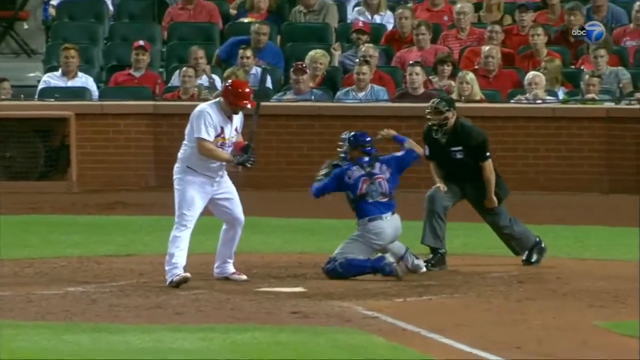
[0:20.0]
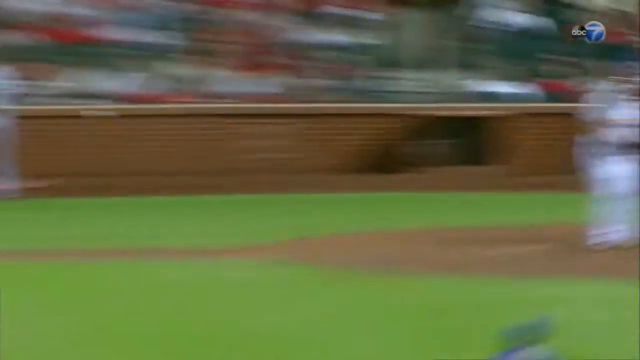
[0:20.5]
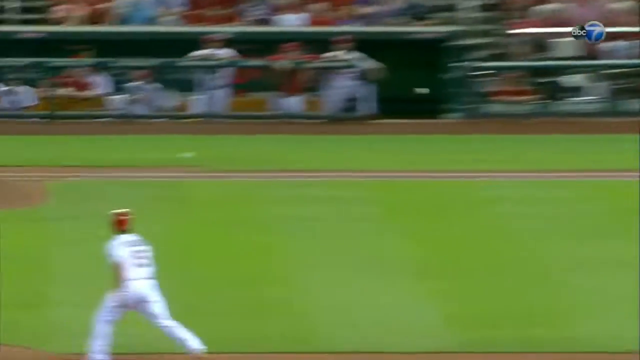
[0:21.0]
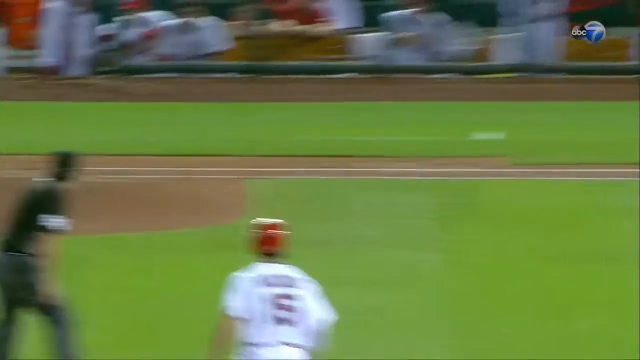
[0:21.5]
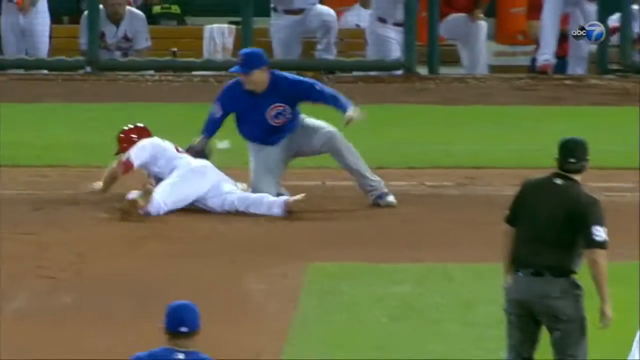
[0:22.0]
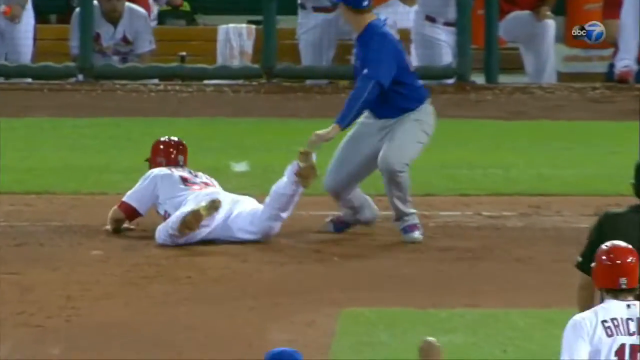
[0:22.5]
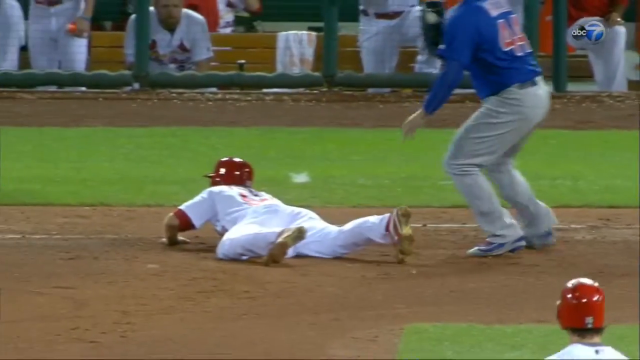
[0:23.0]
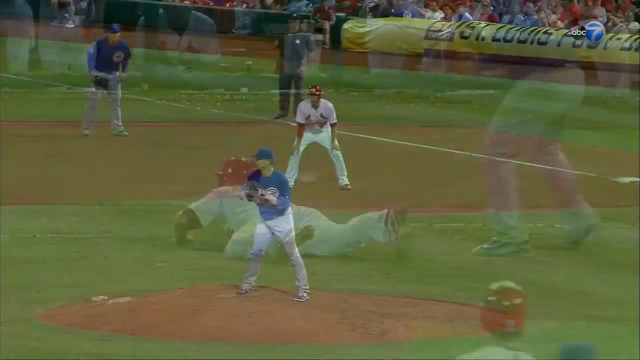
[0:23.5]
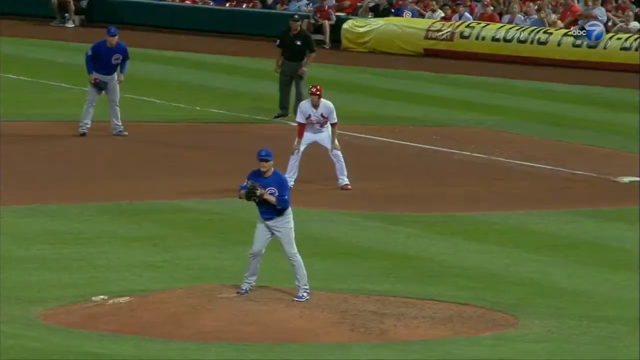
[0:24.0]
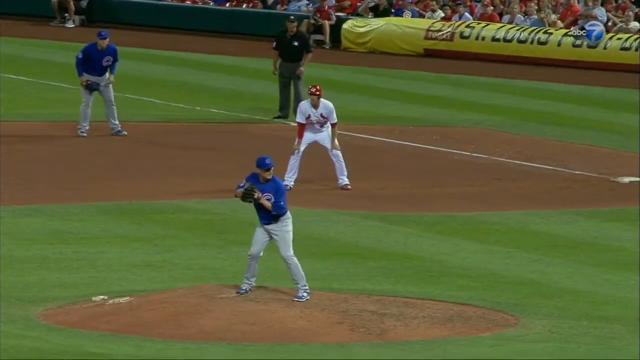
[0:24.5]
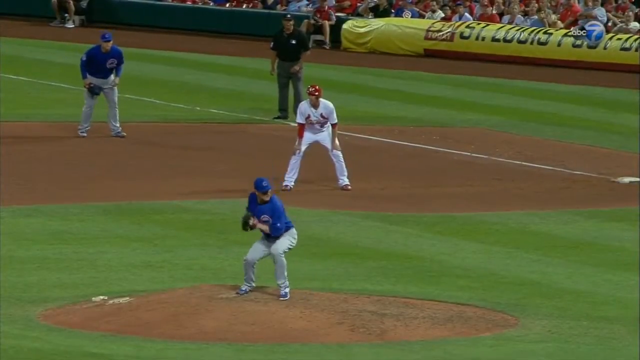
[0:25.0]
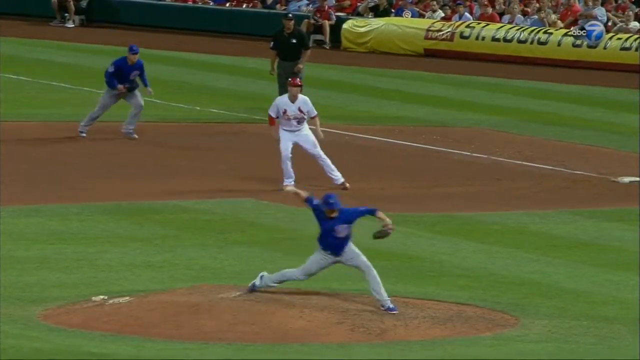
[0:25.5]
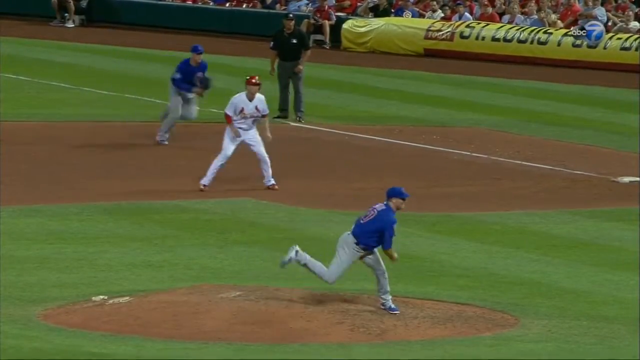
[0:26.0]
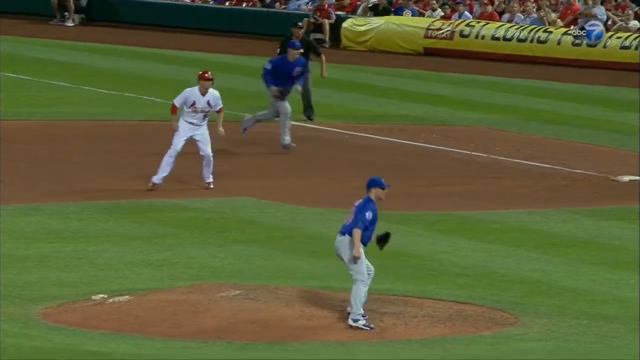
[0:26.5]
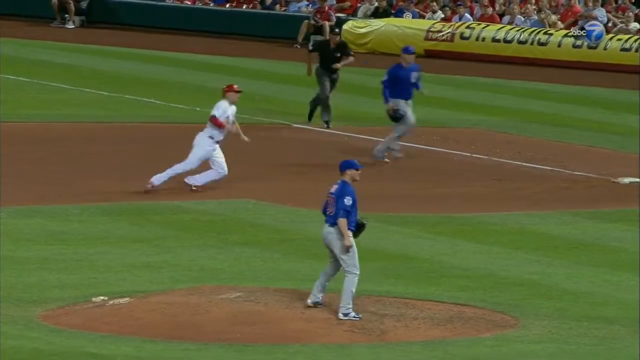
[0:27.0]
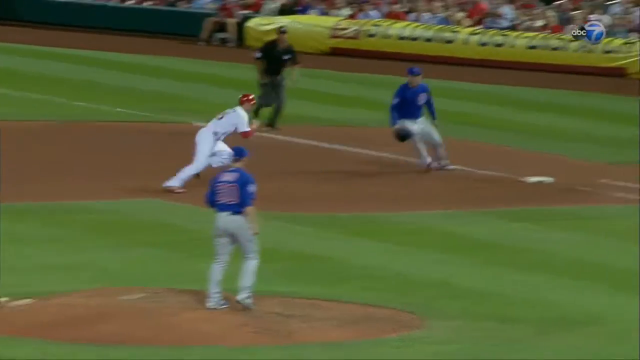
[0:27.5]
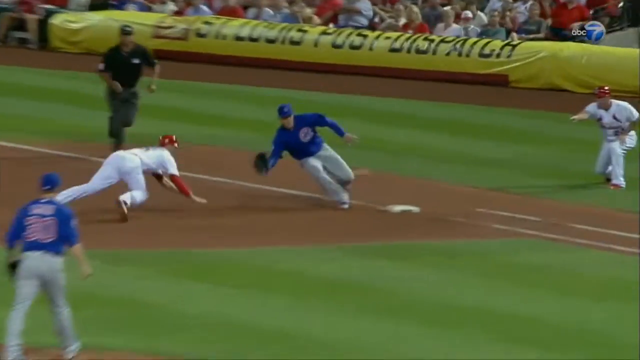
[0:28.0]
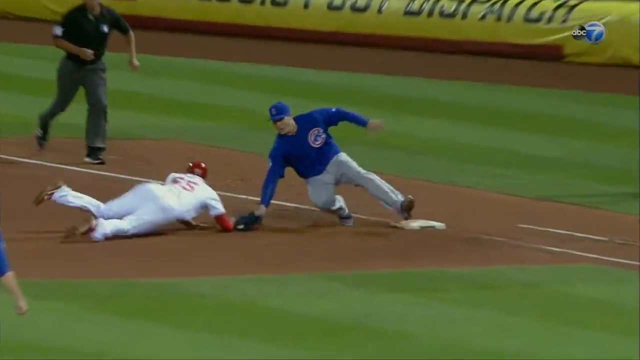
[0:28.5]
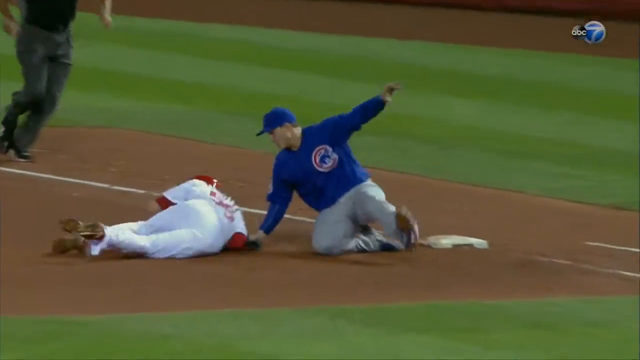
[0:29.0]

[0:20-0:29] The same batter is about to go again, and the umpire is there. He throws the ball to one of his teammates so that he can catch it and try to get the Cardinals player out. A replay is shown, slowed down, showing the player catching the ball before the Cardinals player reaches the base, so the runner does not make it and seems to be out.